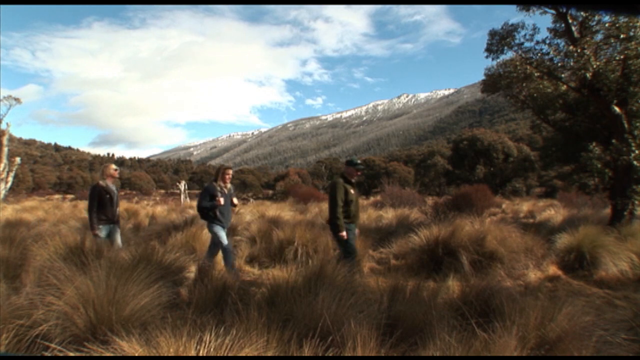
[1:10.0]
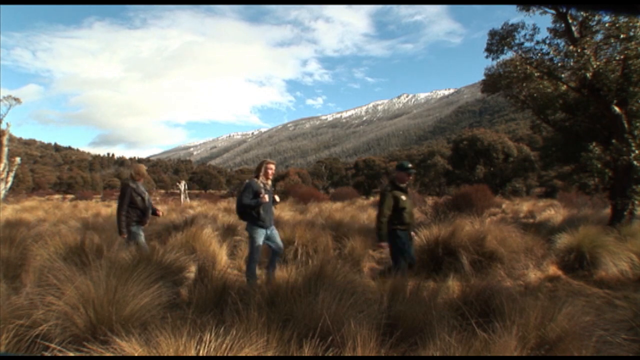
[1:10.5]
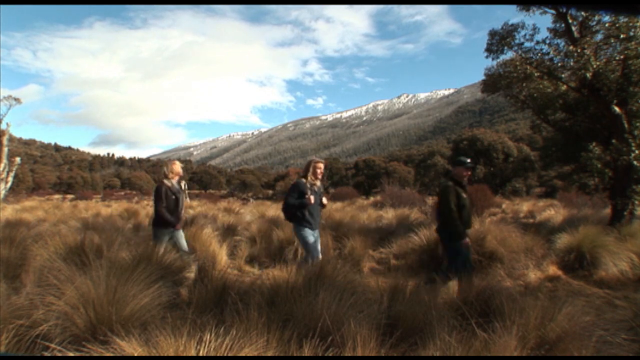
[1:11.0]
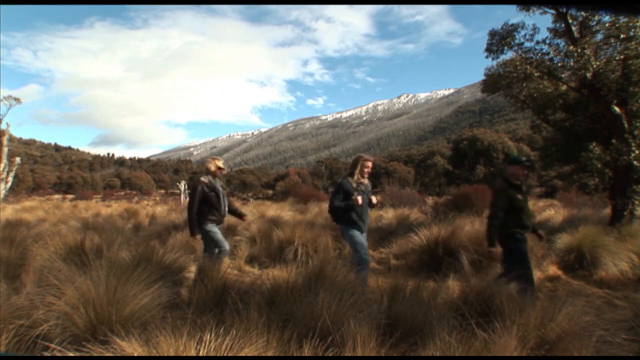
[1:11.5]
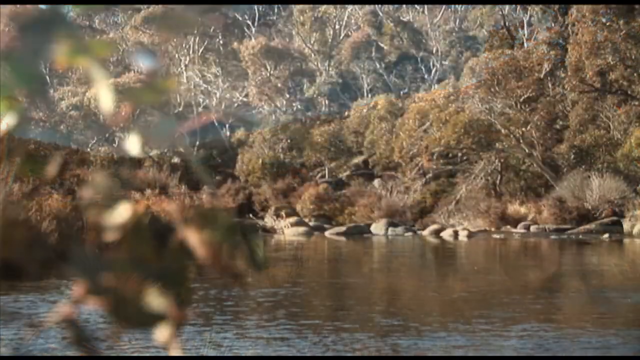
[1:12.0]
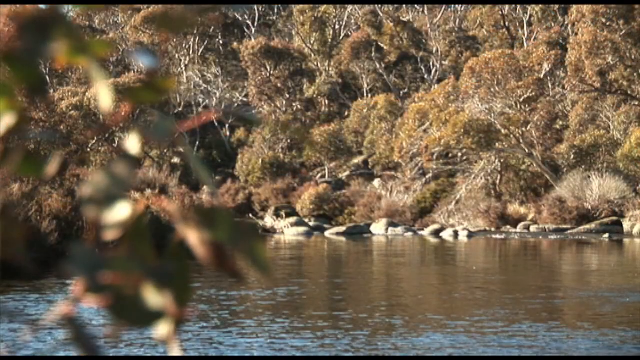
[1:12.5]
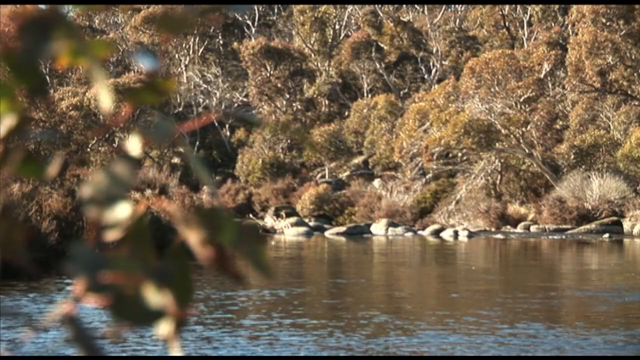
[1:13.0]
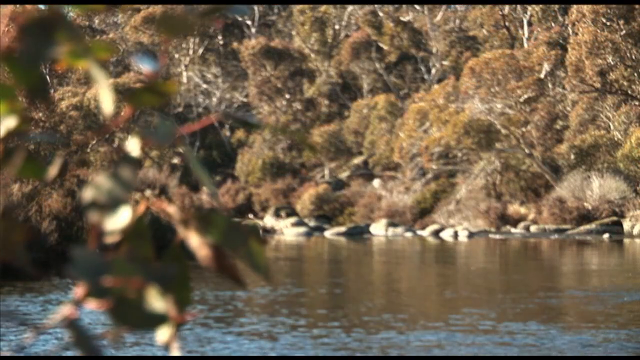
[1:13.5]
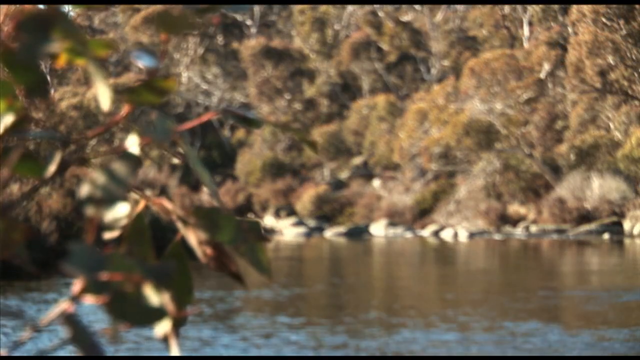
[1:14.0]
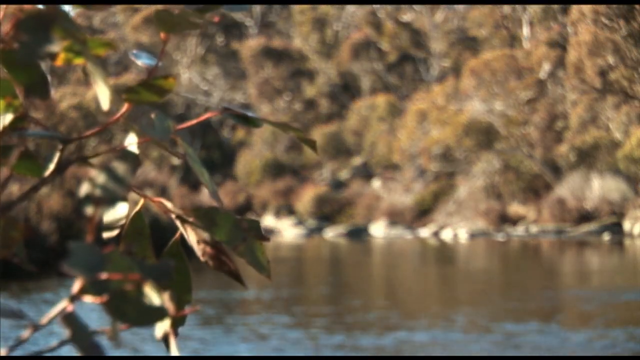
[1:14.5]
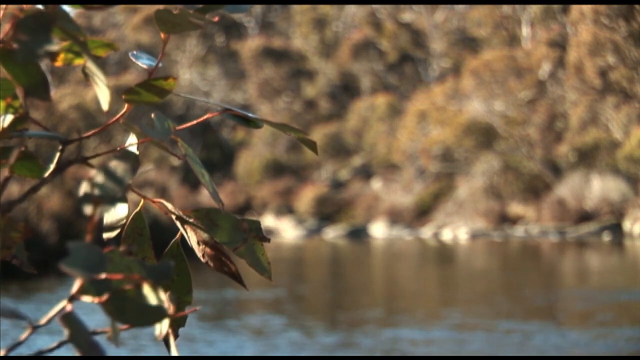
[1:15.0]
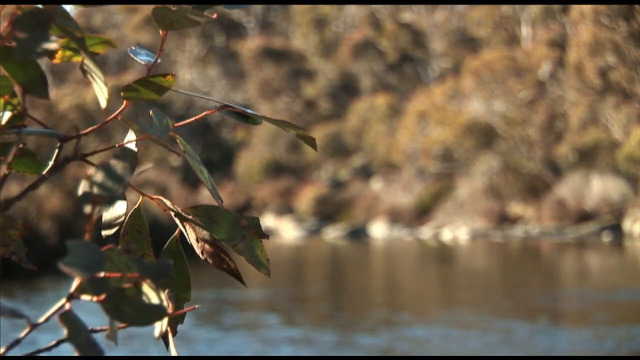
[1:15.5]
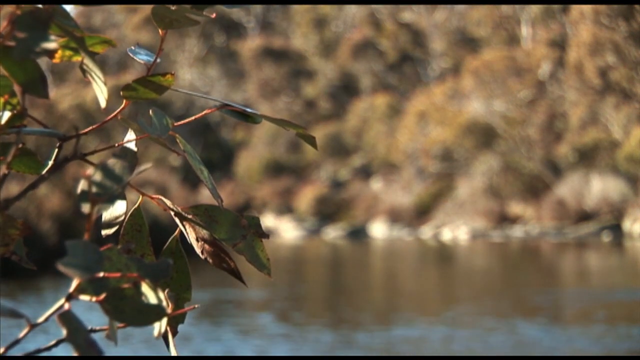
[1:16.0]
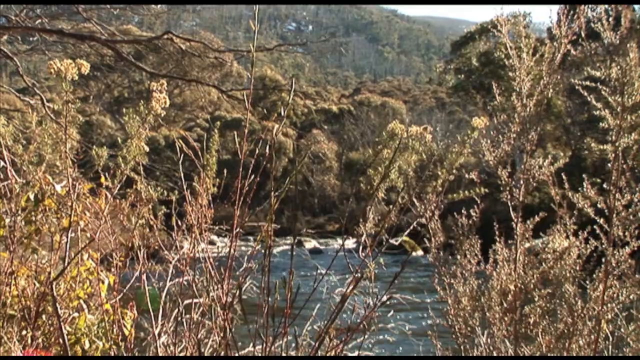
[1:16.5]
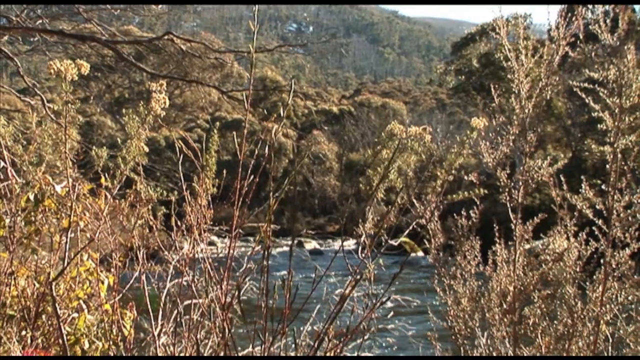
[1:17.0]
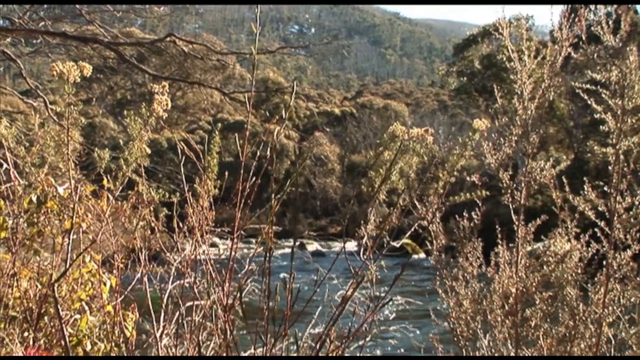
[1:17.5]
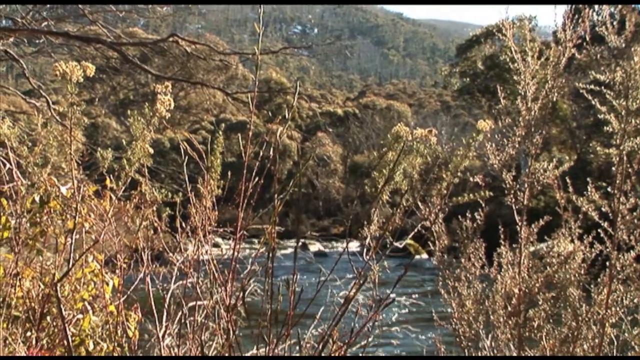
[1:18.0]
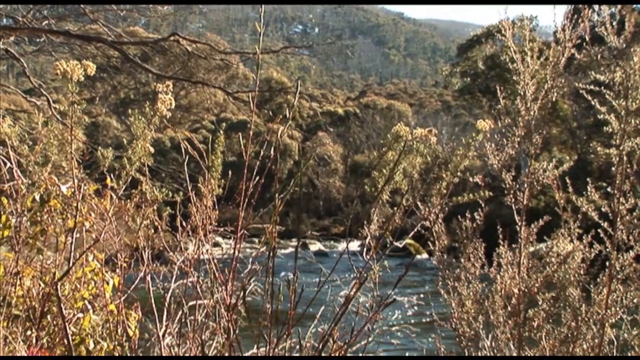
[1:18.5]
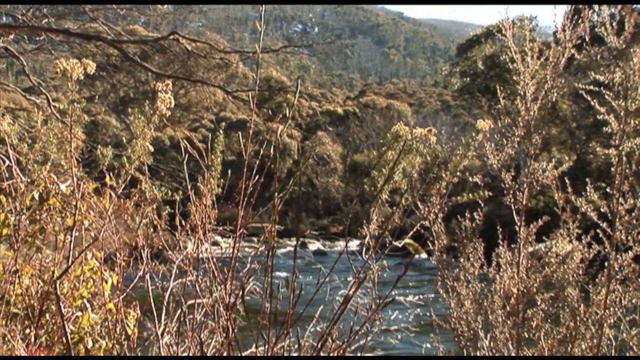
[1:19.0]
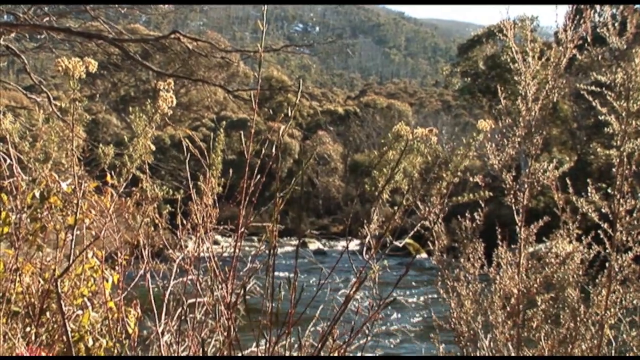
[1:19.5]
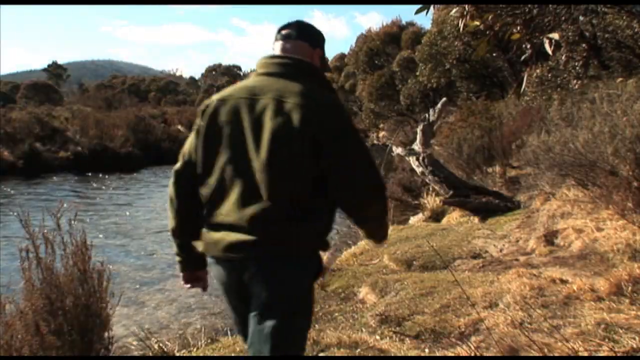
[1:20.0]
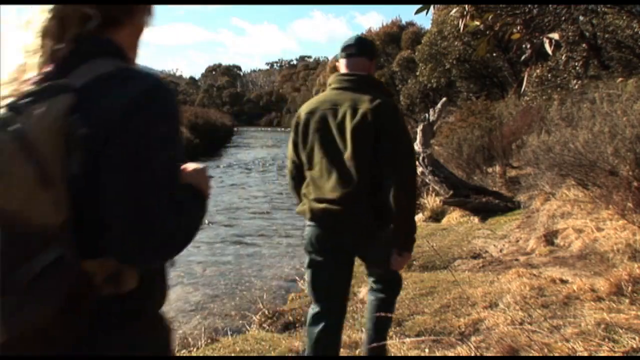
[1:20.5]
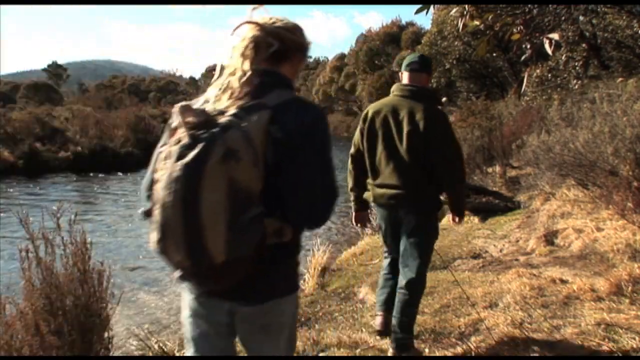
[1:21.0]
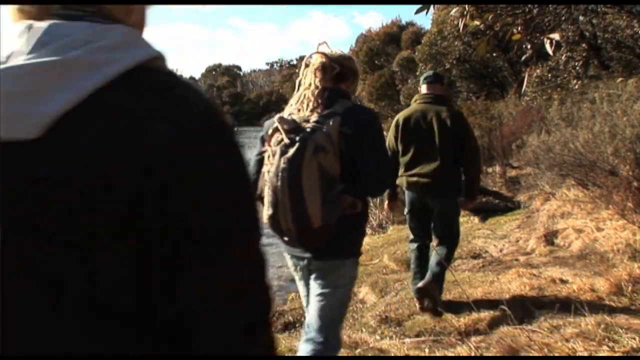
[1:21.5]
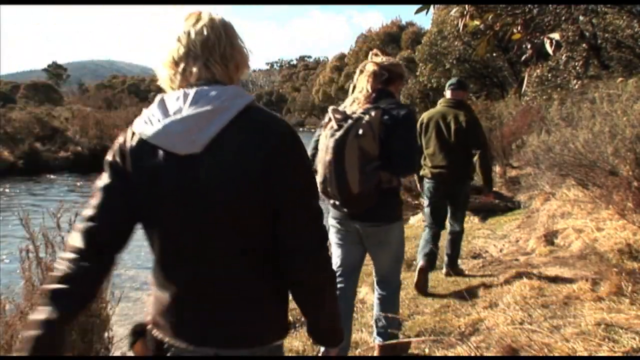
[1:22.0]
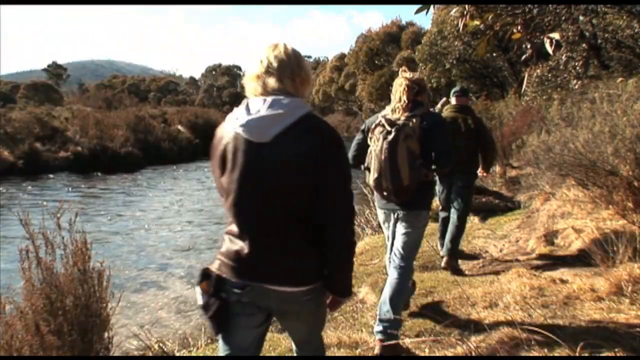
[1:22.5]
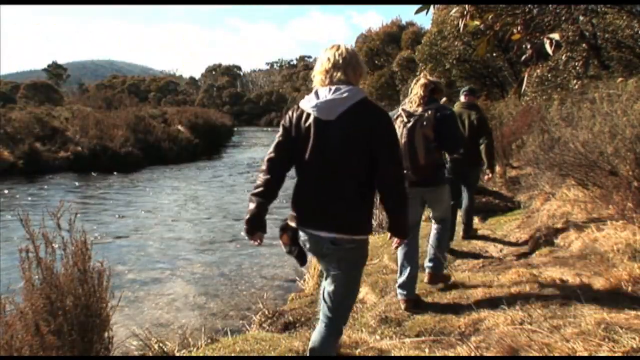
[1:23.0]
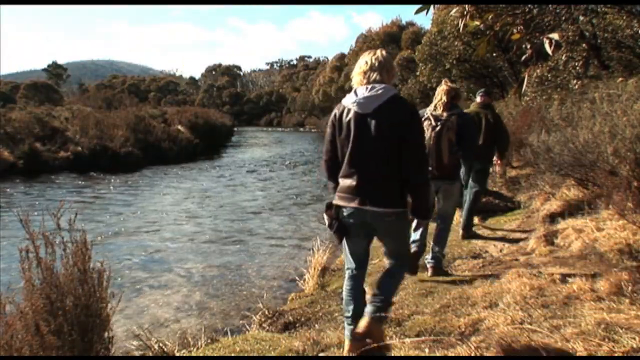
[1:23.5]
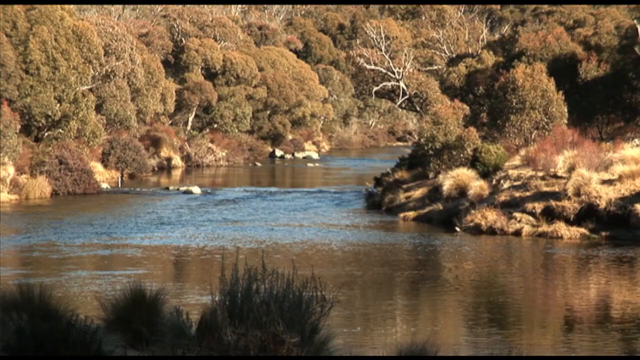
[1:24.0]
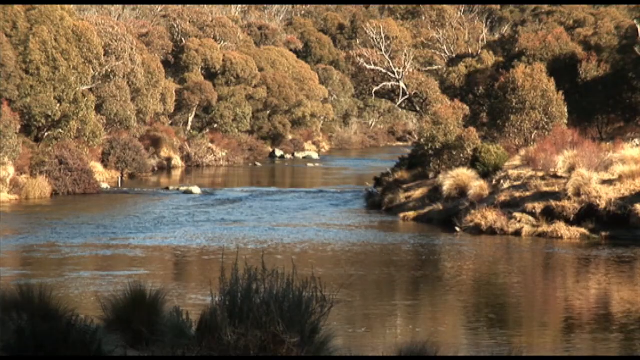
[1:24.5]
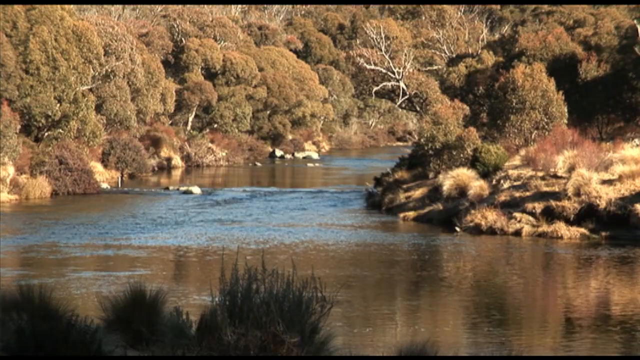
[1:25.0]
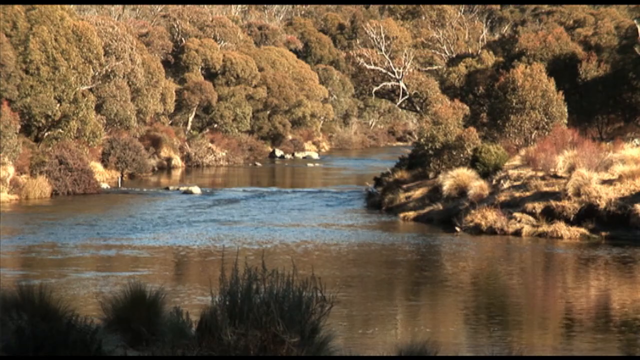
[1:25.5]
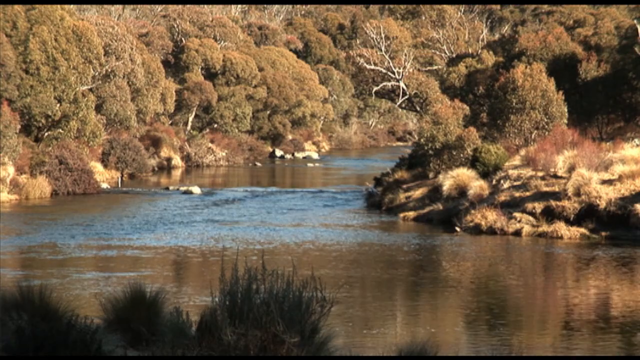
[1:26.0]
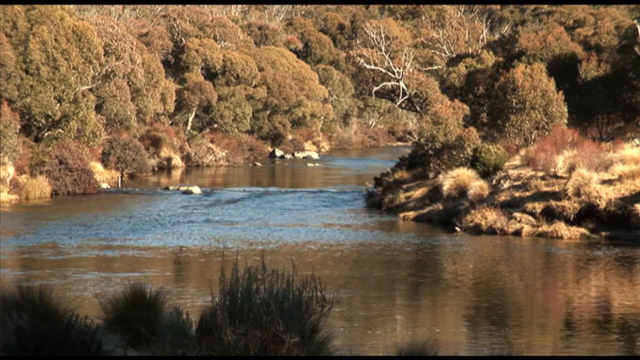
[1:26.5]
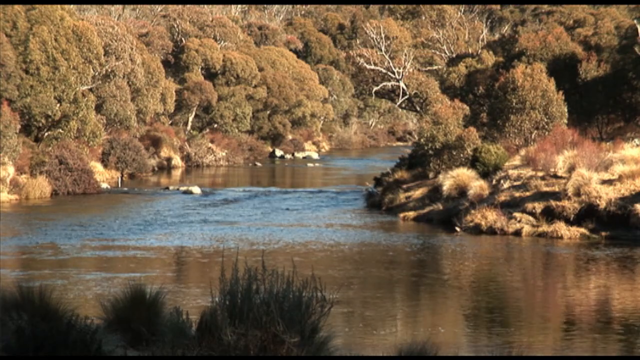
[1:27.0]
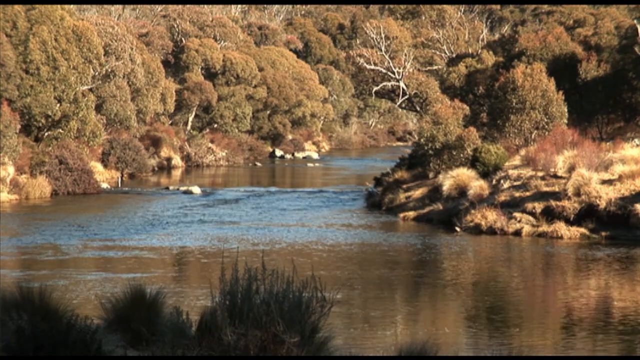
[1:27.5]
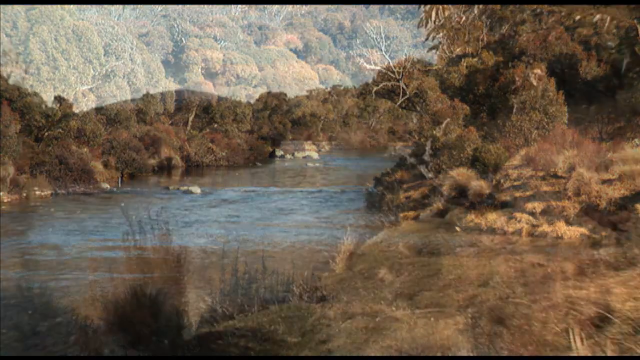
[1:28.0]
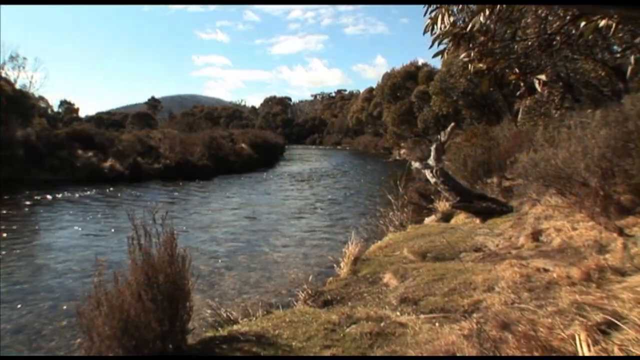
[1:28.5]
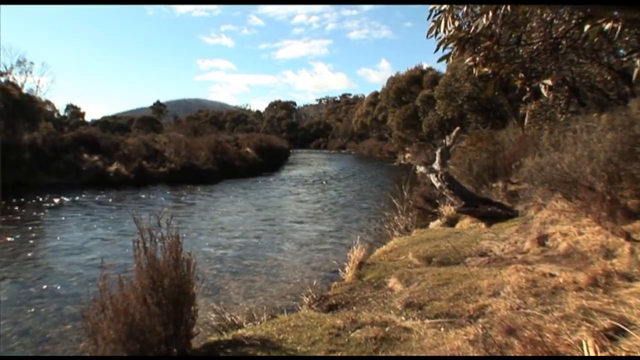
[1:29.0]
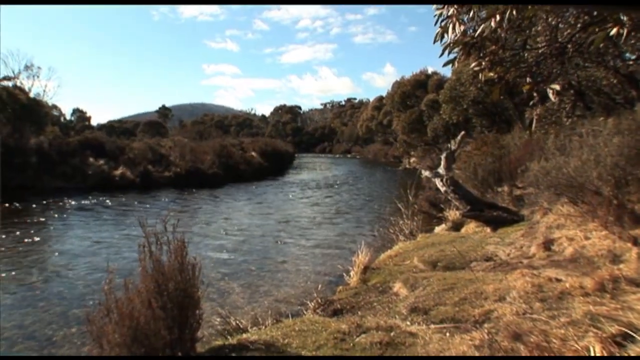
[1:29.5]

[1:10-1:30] As the hikers walk next to the stream, the man with the baseball cap and green fleece is at the front, someone with long, kind of dreadlocked hair wearing the striped rucksack is in the middle, and the person with blonde hair and a hoodie is at the back, with something hanging out of their back left pocket and wearing jeans. The river then appears with trees on either side, and then the river is shown flowing.